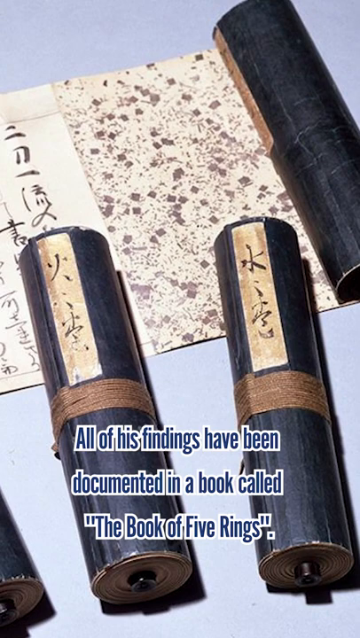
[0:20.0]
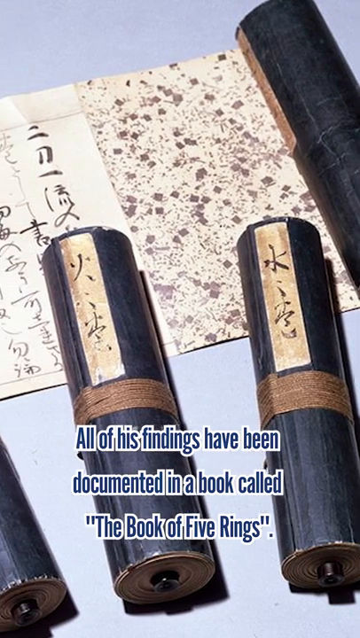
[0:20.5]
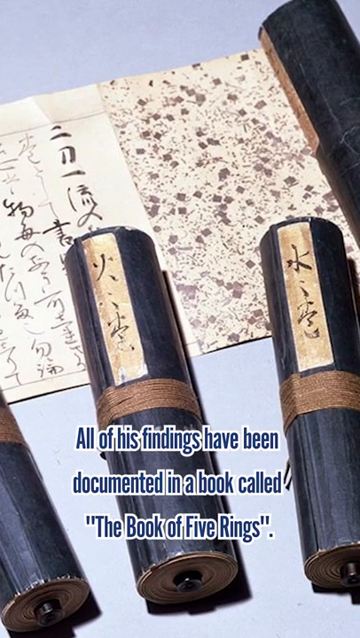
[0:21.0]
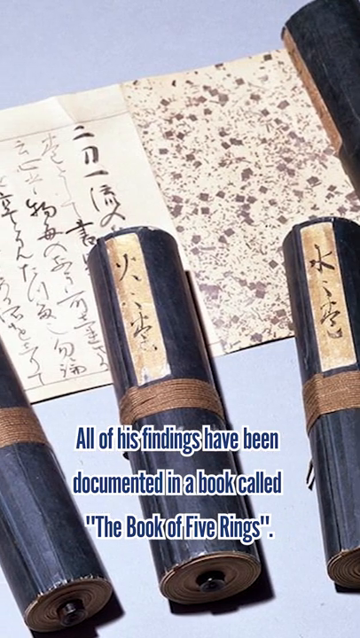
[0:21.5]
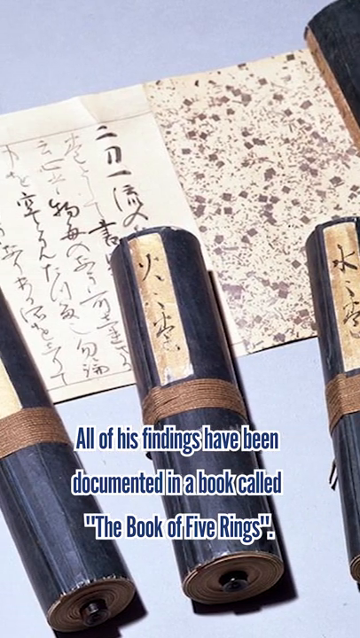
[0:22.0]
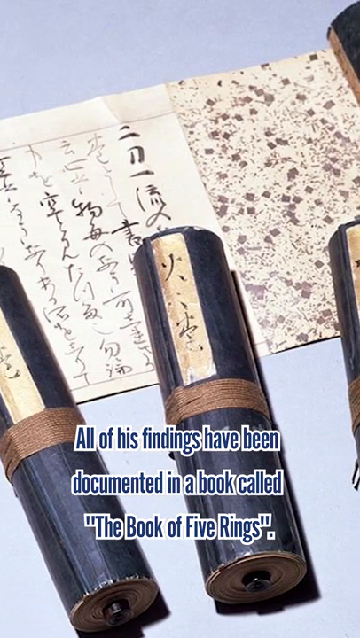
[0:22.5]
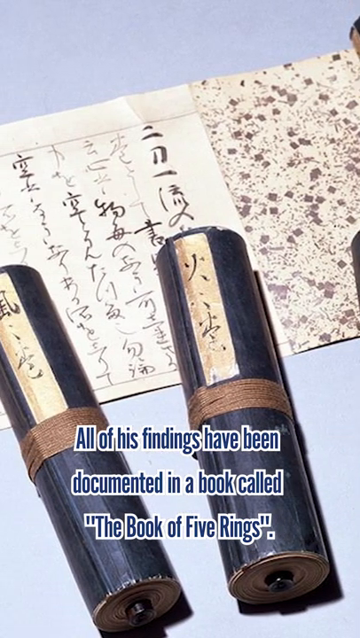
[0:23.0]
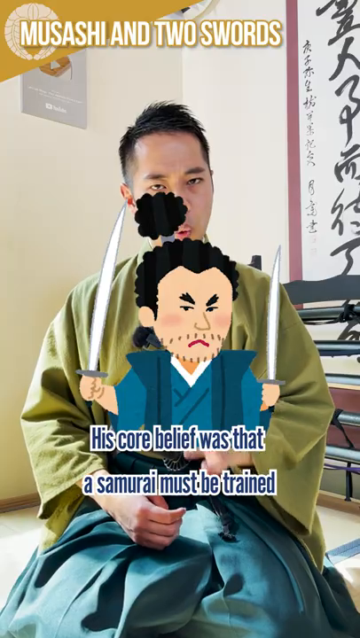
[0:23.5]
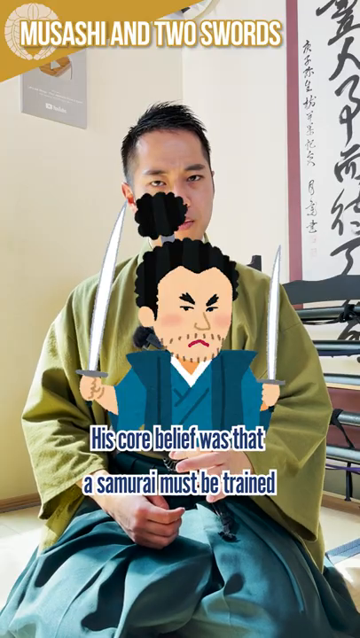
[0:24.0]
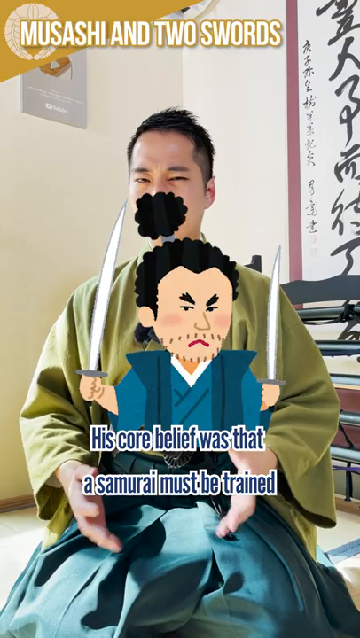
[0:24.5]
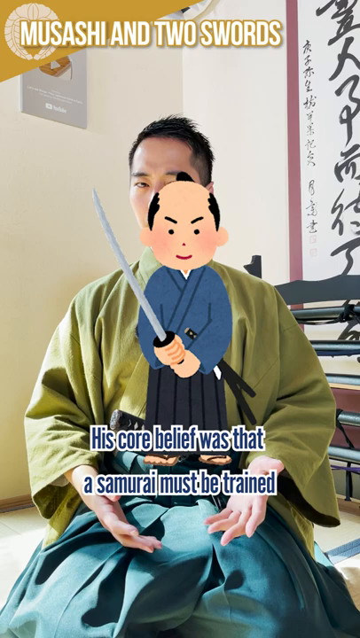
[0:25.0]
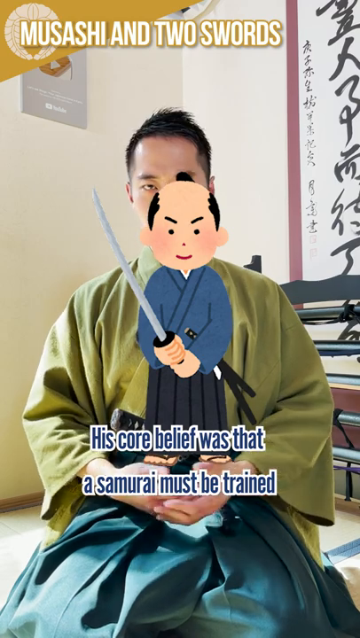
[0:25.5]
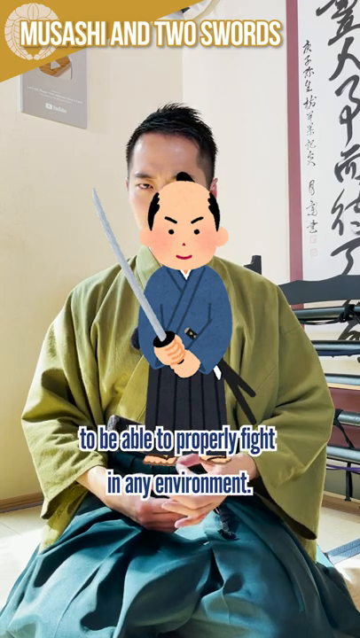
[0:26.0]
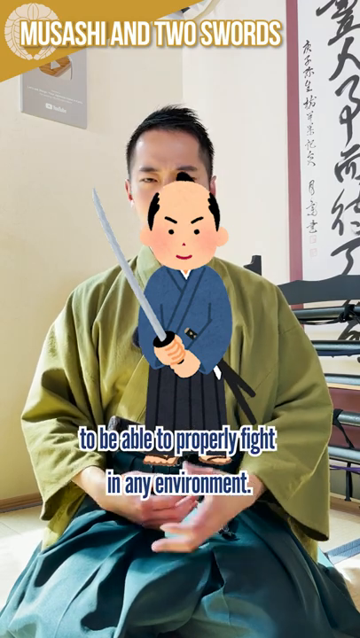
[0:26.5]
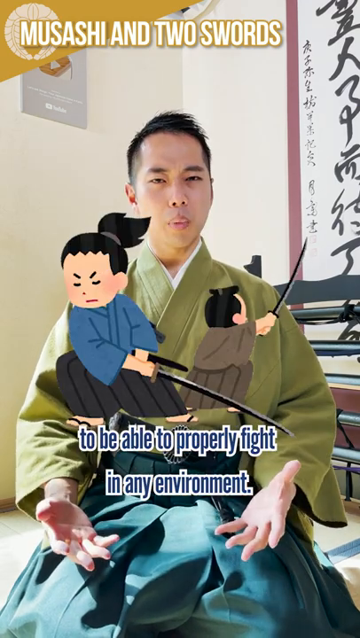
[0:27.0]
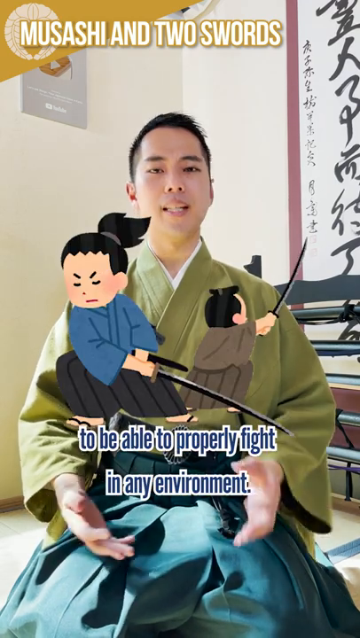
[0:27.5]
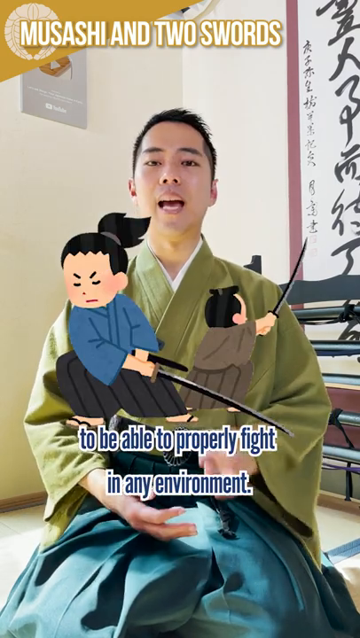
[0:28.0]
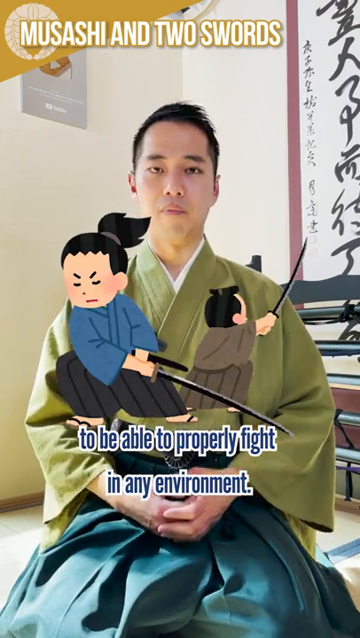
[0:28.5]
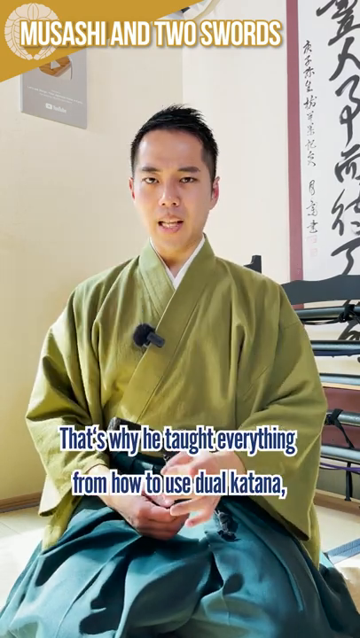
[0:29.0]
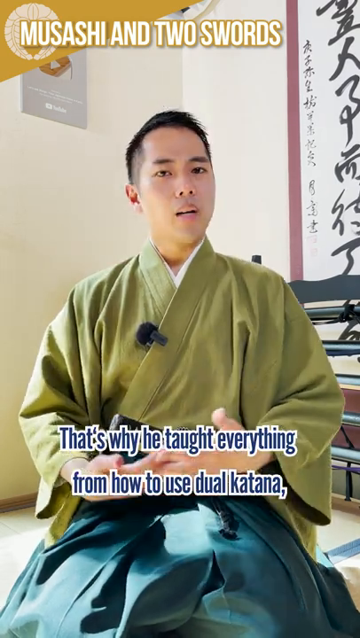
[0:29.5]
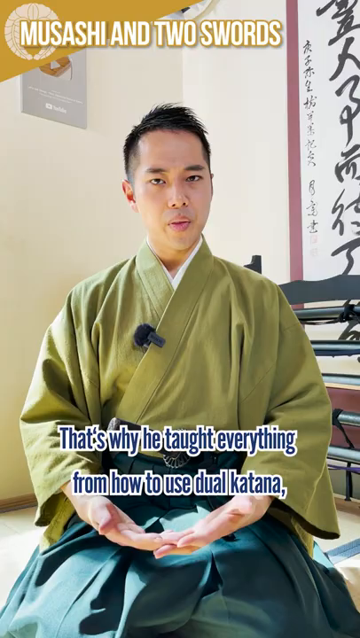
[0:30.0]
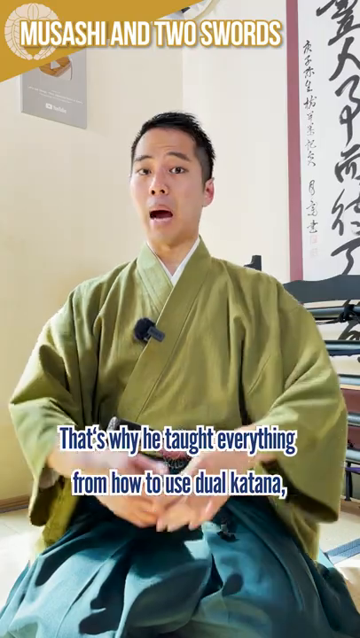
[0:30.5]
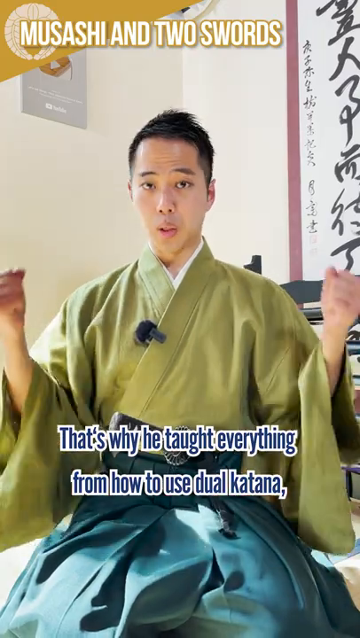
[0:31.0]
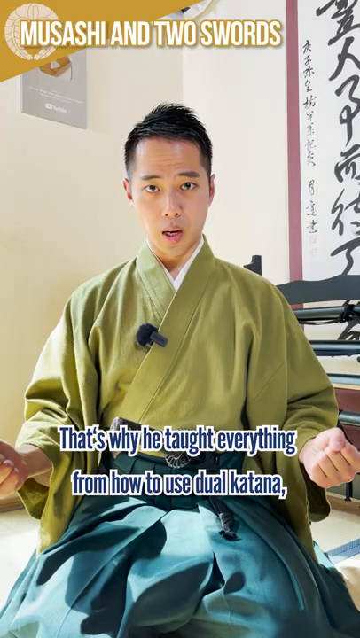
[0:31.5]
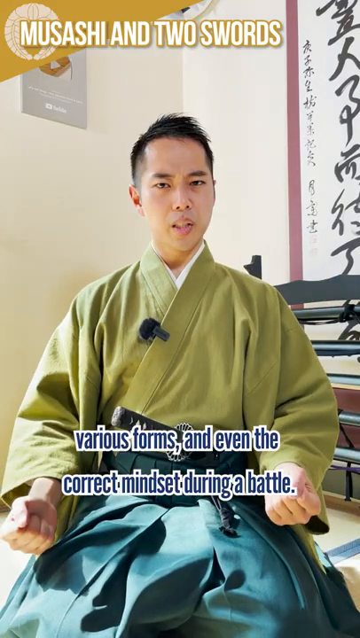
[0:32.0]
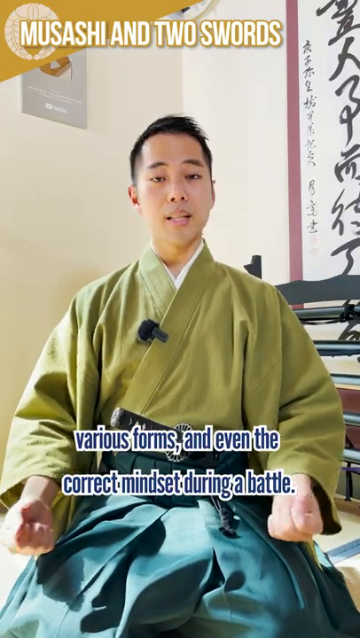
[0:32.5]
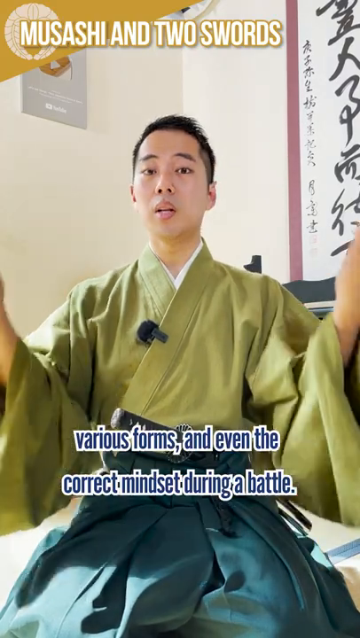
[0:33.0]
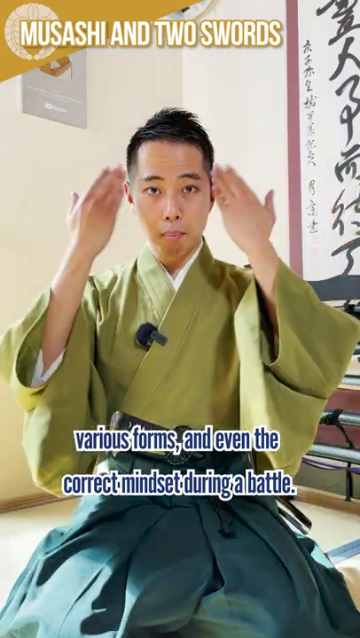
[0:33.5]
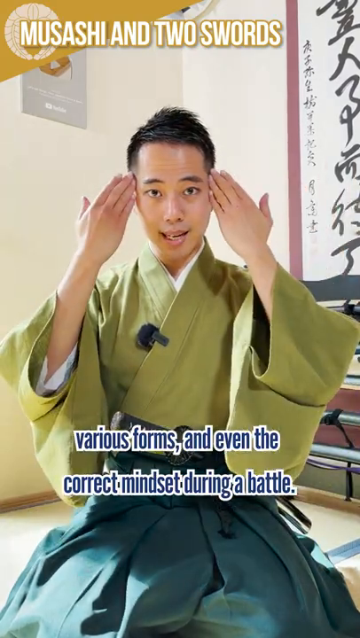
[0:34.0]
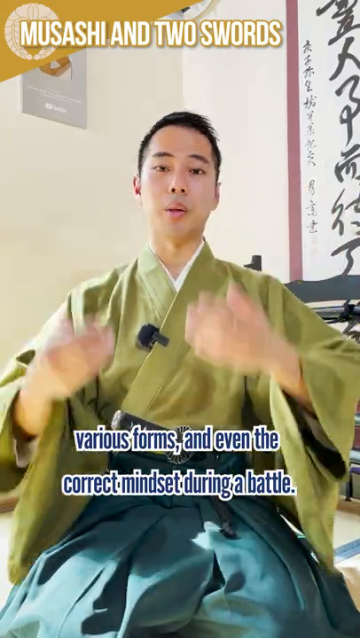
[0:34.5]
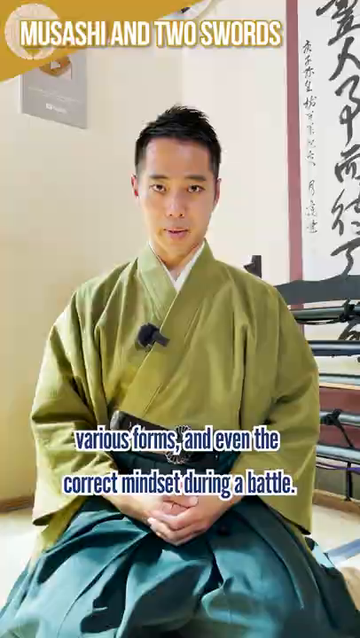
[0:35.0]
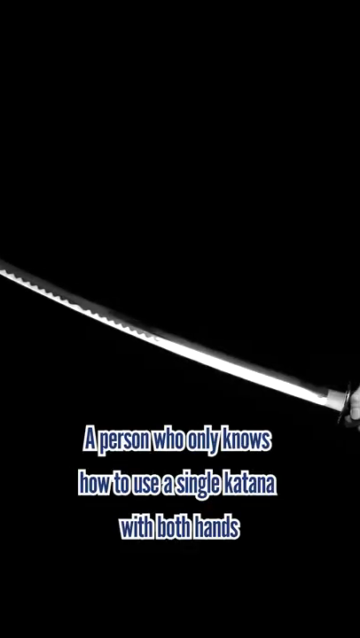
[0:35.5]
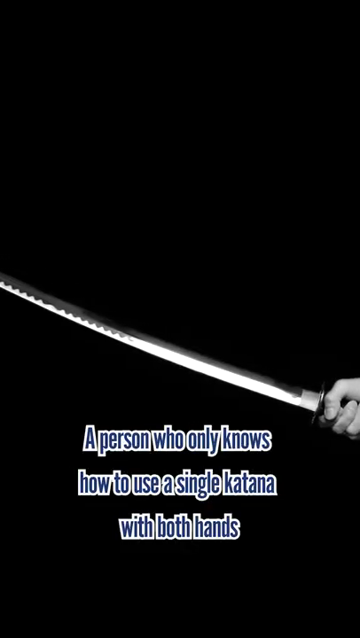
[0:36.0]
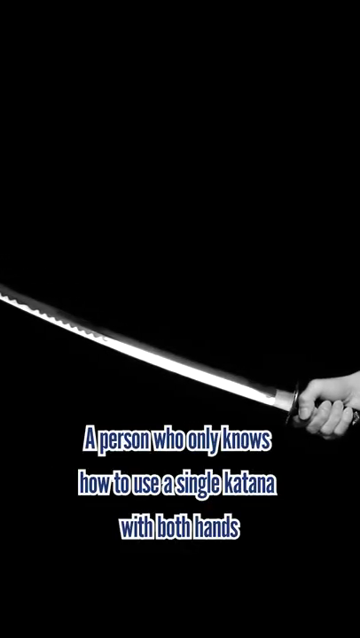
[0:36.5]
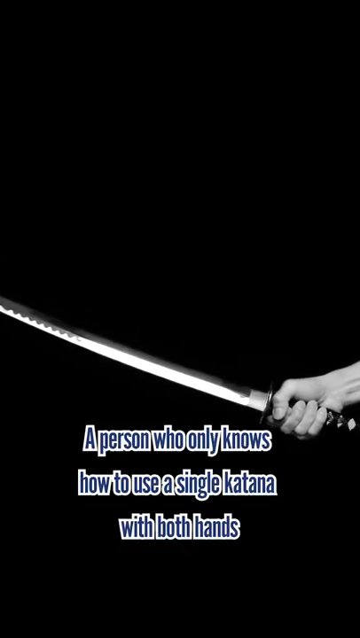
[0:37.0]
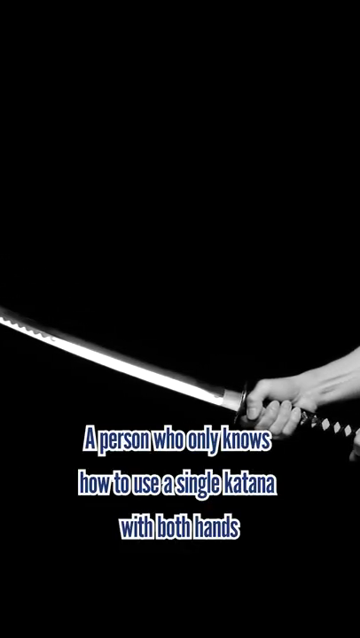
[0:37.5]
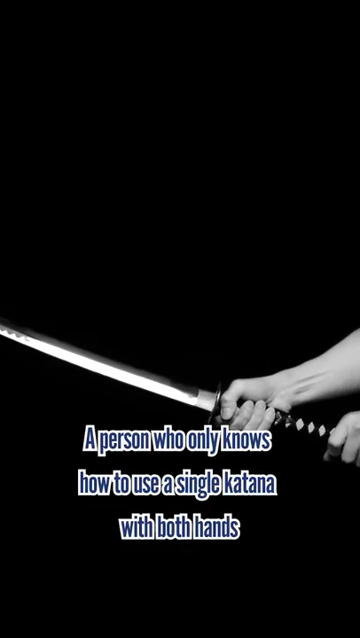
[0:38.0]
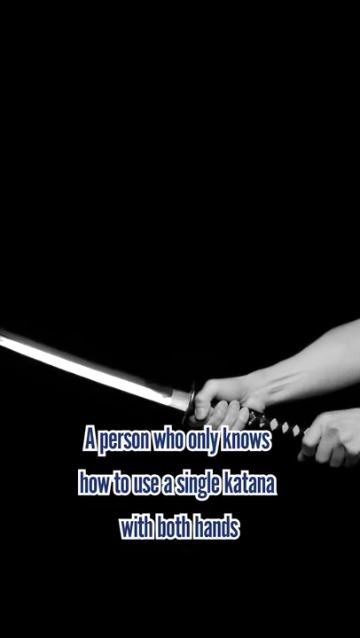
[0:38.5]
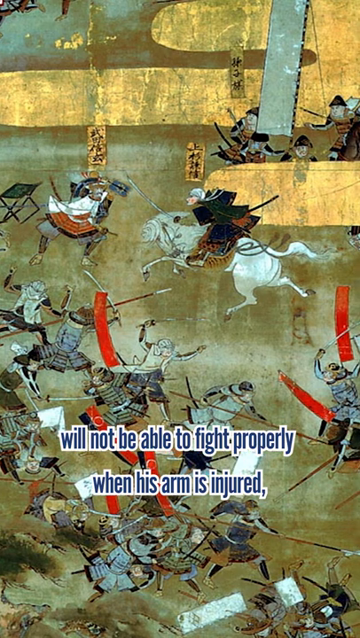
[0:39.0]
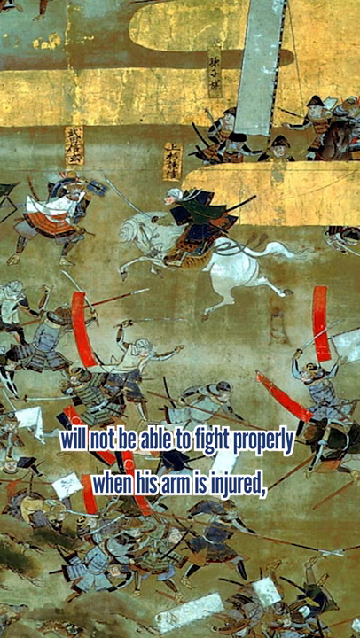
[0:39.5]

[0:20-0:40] Multiple text overlays appear on screen over the course of the video.